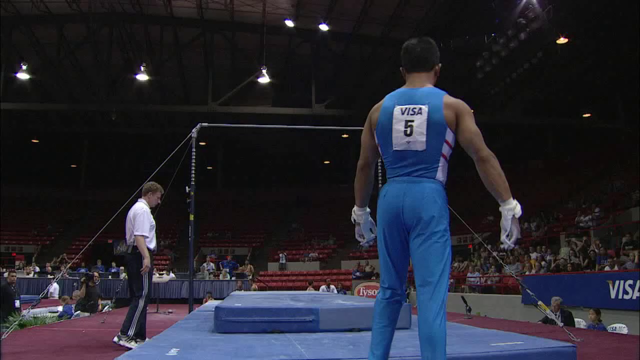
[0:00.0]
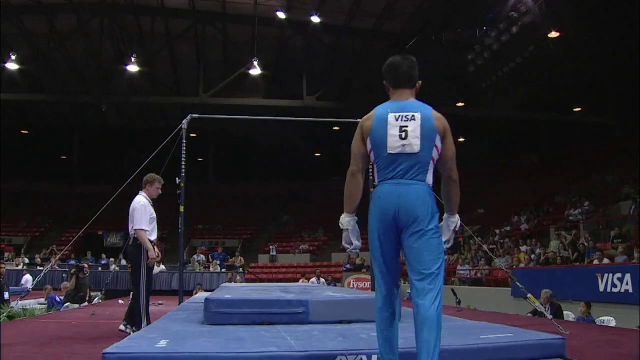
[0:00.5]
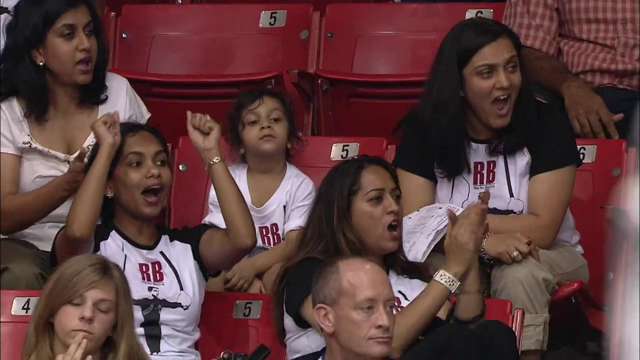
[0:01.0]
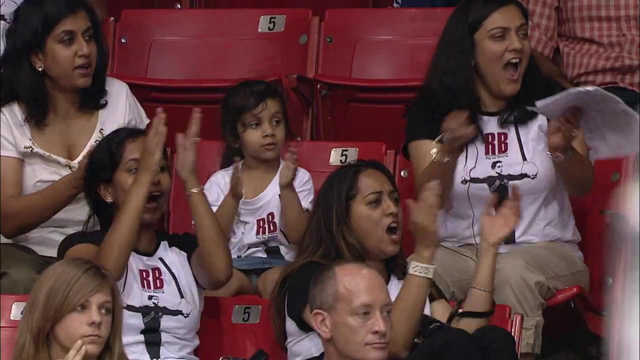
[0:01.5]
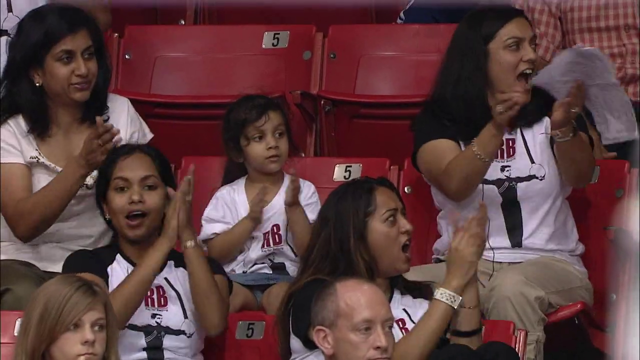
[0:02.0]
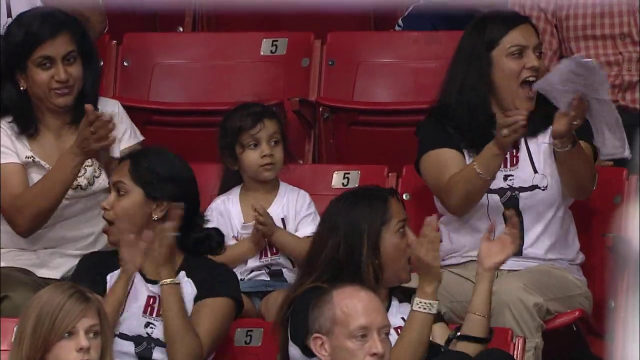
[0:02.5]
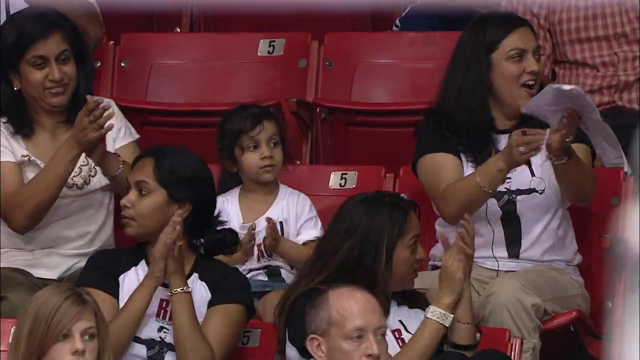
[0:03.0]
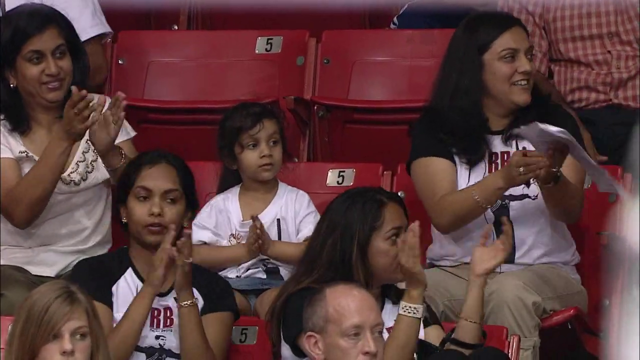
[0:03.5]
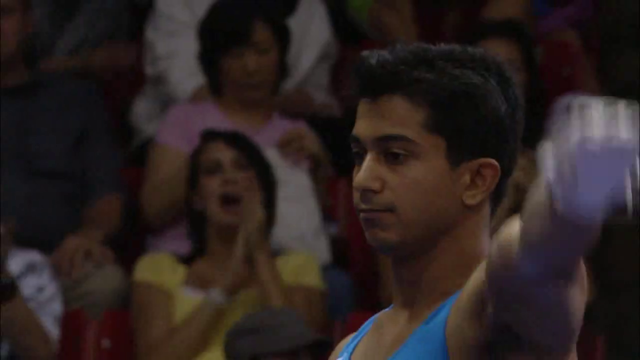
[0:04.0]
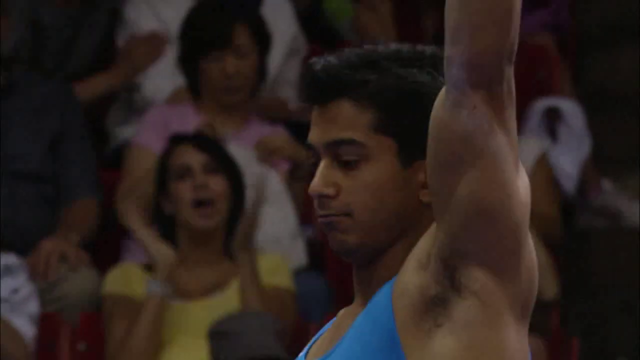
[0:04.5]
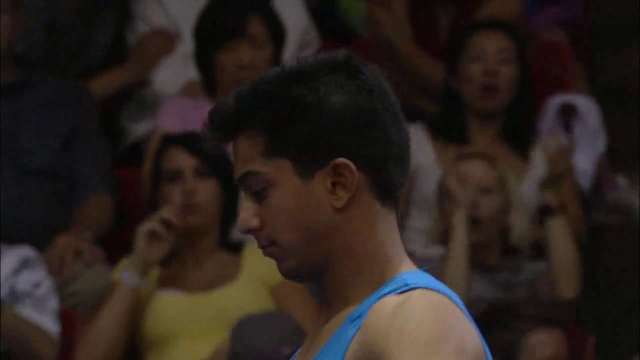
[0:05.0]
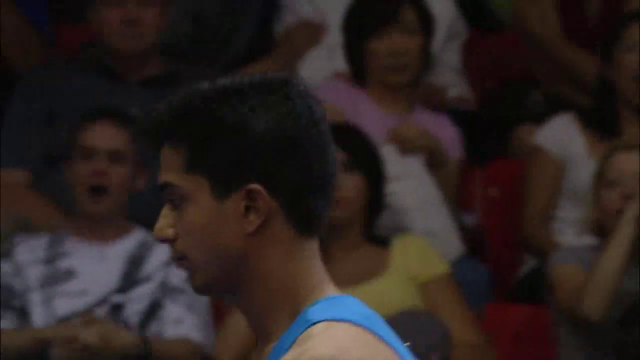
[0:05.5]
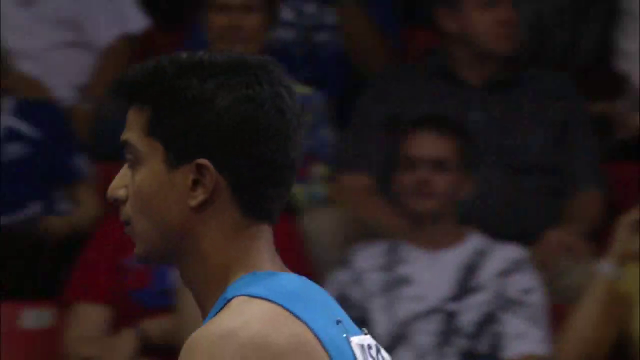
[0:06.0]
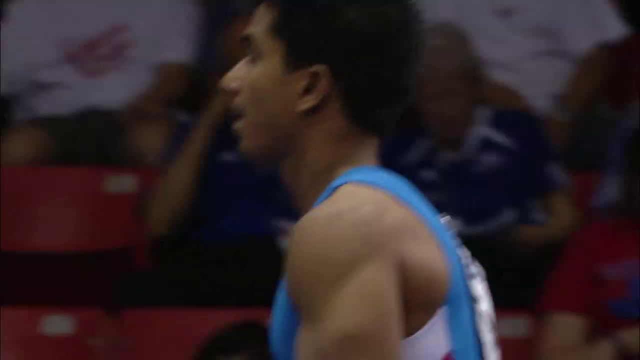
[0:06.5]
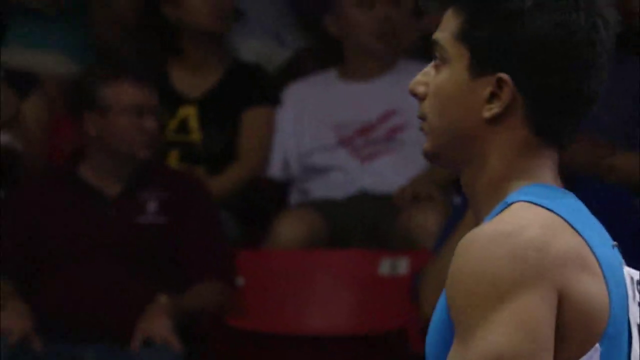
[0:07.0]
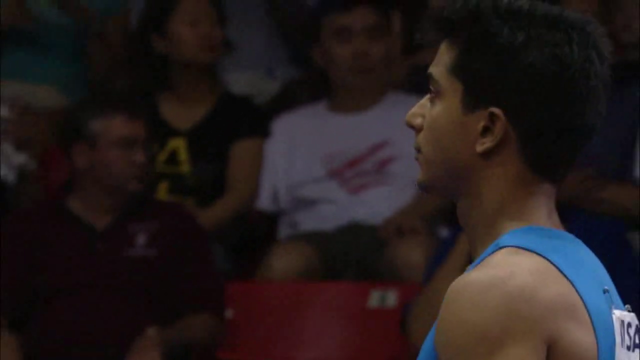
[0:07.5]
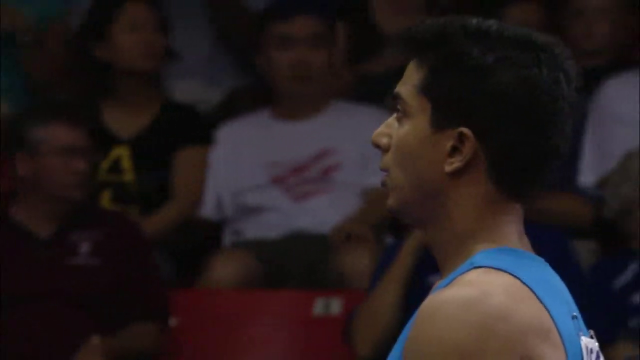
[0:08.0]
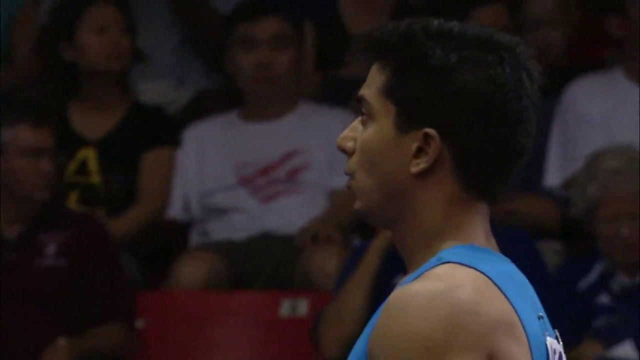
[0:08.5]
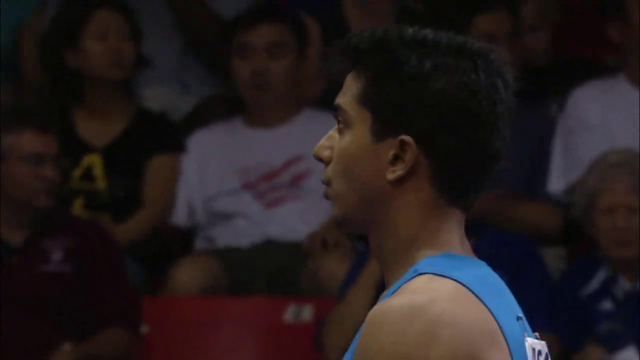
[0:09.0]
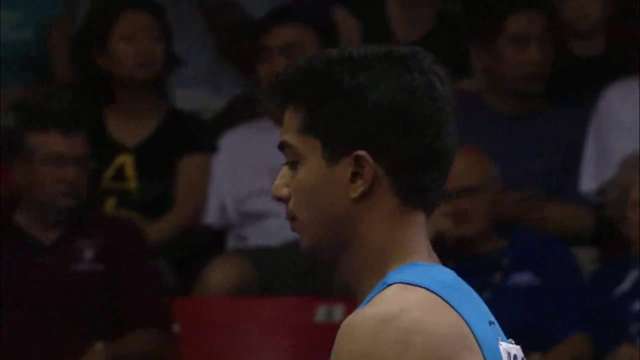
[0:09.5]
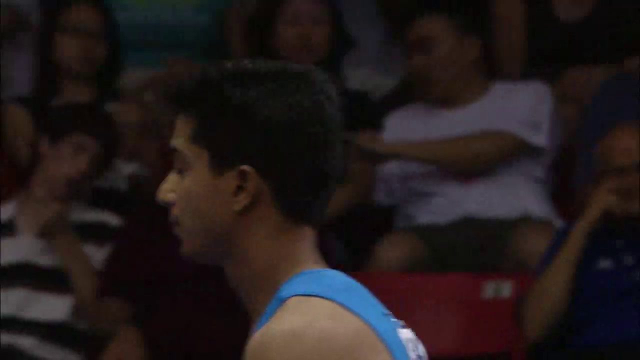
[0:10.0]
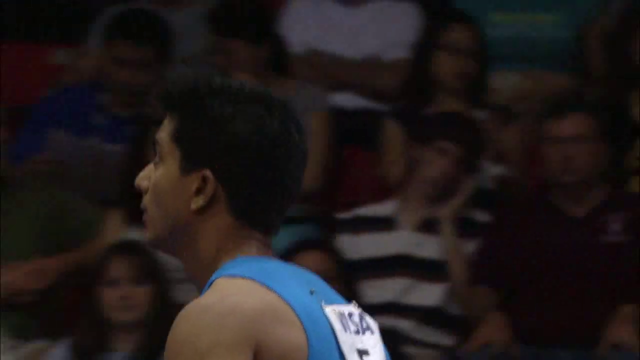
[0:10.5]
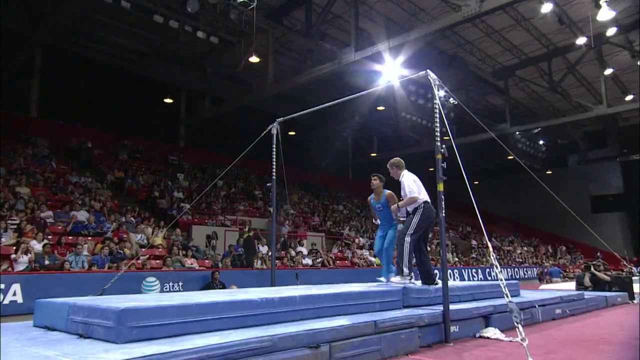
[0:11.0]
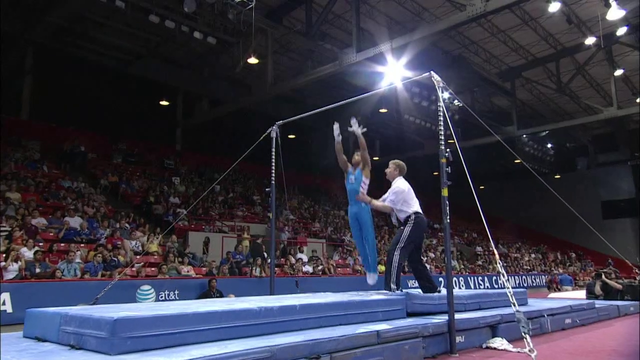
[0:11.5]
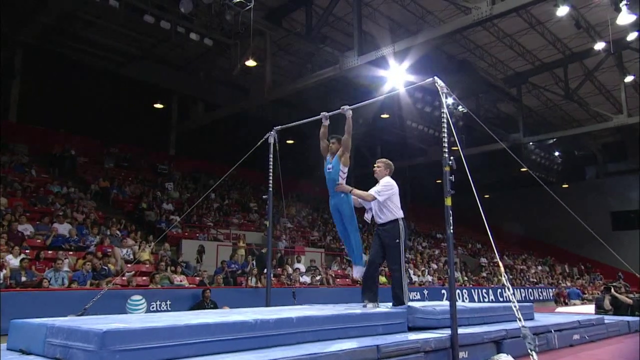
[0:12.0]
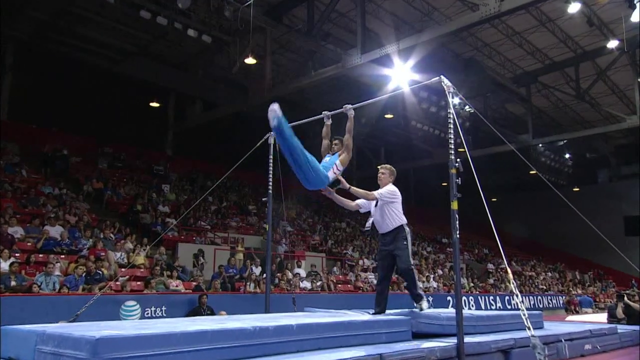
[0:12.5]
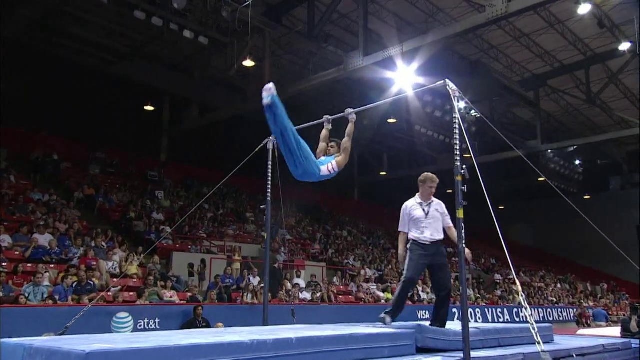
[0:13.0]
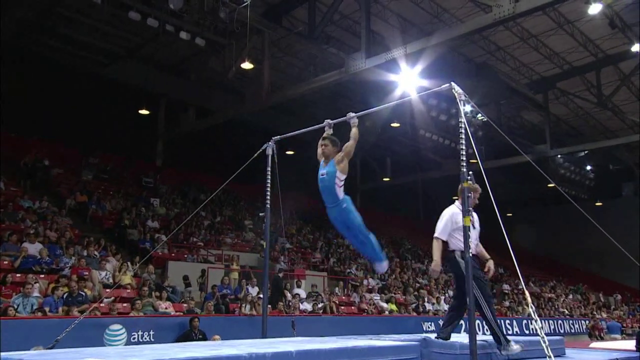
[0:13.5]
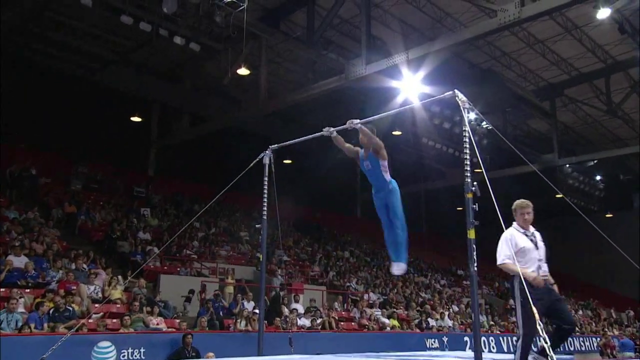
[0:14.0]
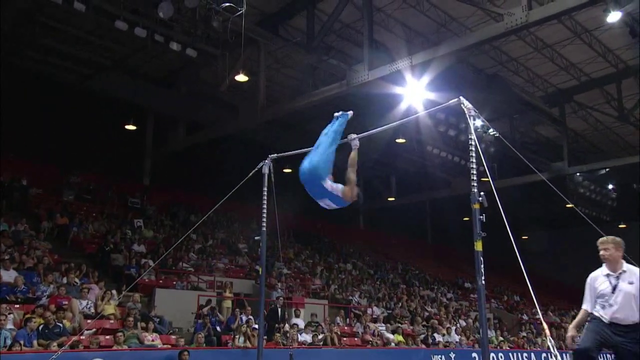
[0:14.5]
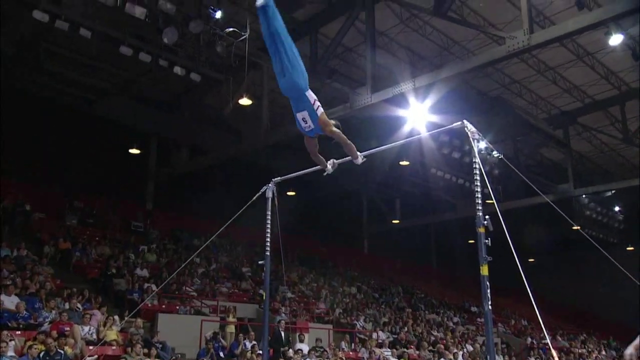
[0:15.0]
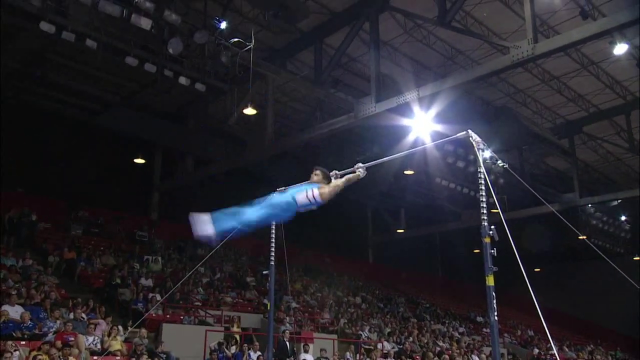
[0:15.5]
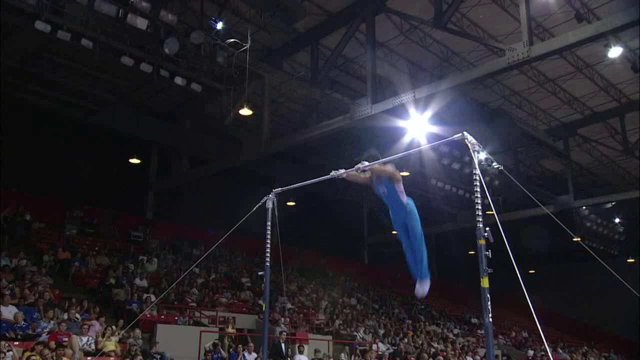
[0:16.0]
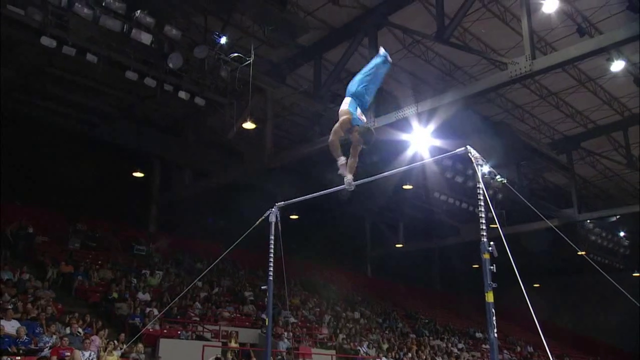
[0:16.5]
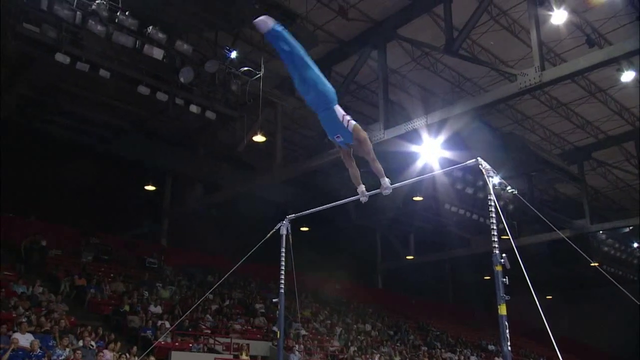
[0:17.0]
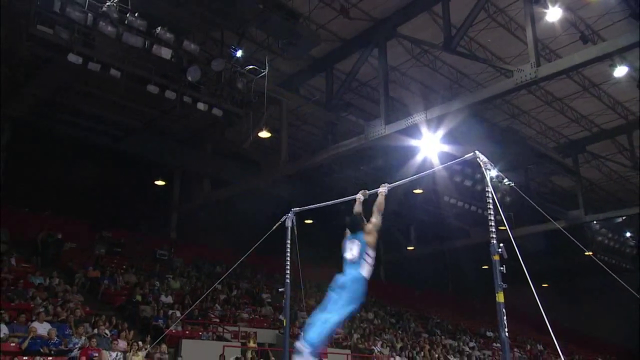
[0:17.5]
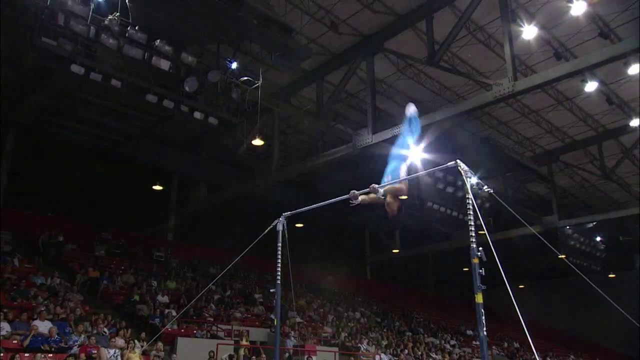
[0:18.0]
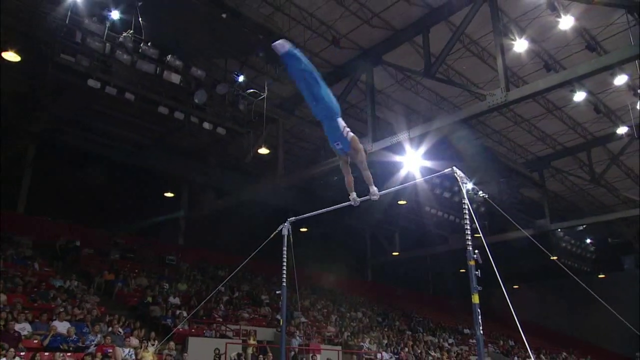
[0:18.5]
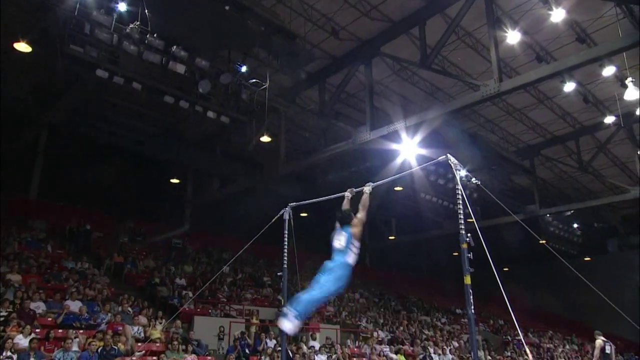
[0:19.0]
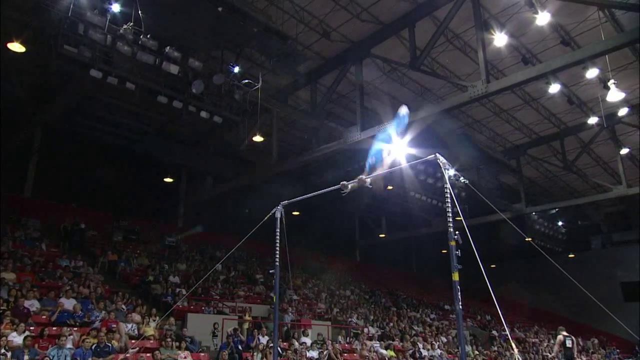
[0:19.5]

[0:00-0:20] A gymnast gets ready to go up onto the uneven bars. He stretches his arms out to the front, to the side and upwards, and then a helper helps him jump up onto the bars. He spins around the bar, which is somewhat bouncy, so as he pulls down, the bar pulls down as well. He wears white gloves and might have put a little powder on them. He keeps spinning, gaining momentum so he can spin even faster. There are lights above him, and the setting is kind of like a big auditorium, or maybe a big gymnasium warehouse. Spectators in the background watch the performances. The video cuts to a group that could be his family or friends, who kind of resemble him: they all have dark hair like he does and slightly tanner skin. They cheer and clap as they watch him perform.